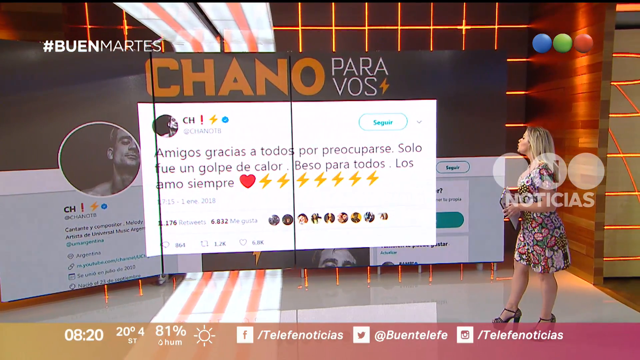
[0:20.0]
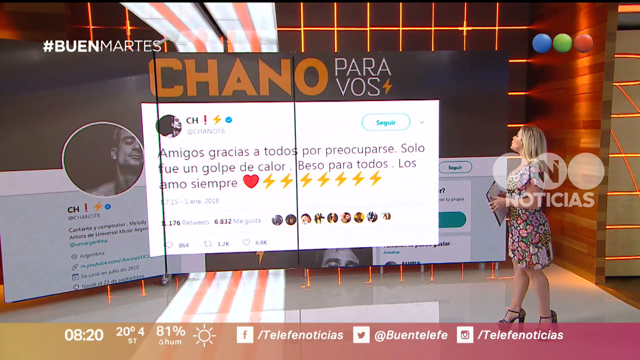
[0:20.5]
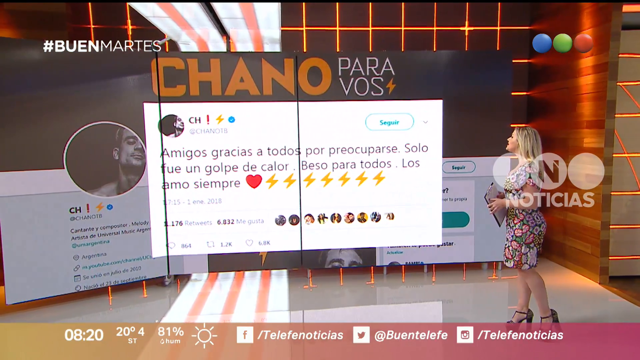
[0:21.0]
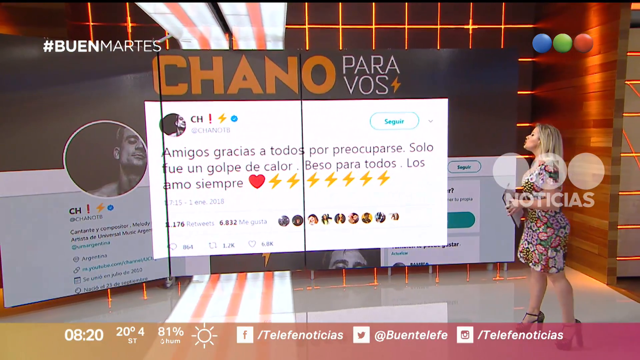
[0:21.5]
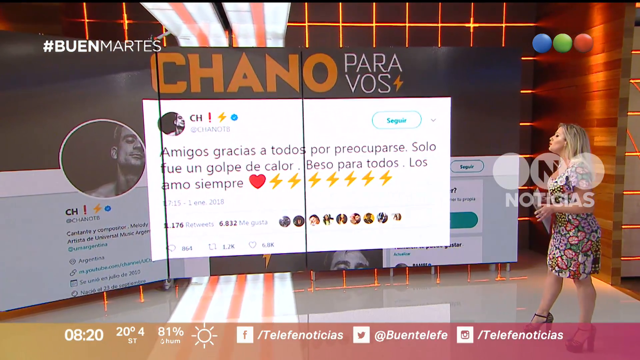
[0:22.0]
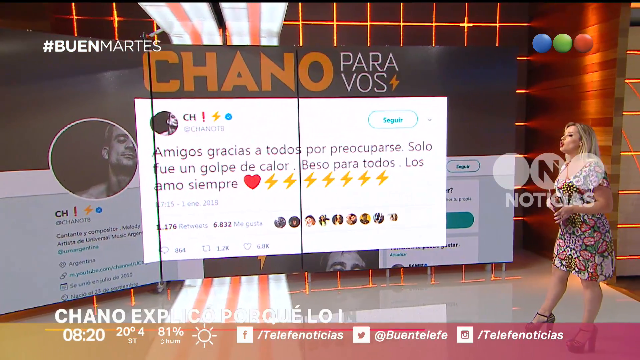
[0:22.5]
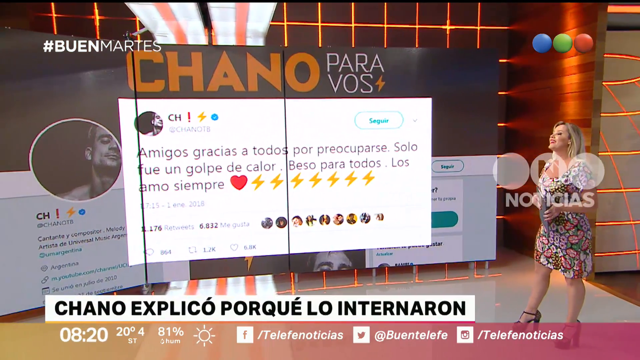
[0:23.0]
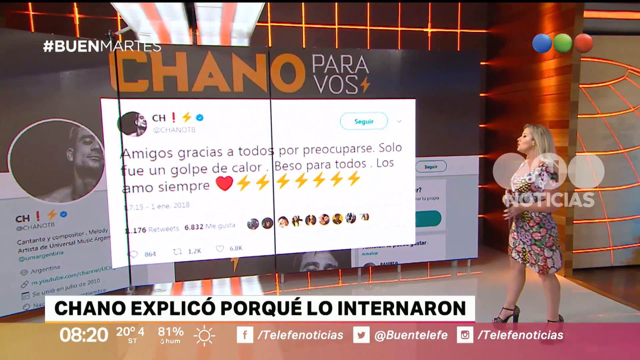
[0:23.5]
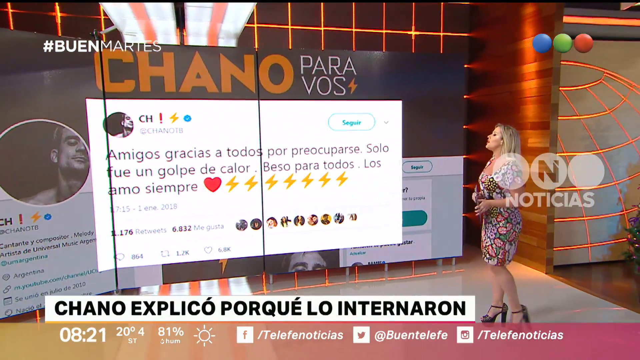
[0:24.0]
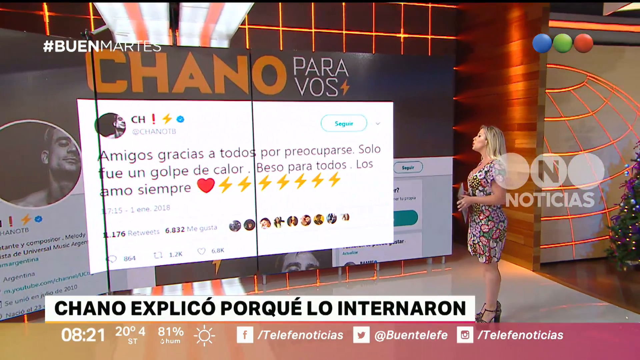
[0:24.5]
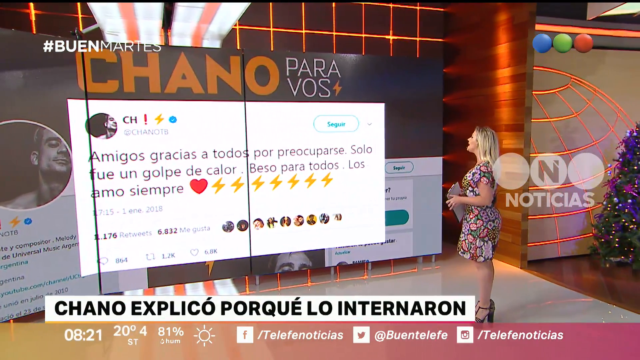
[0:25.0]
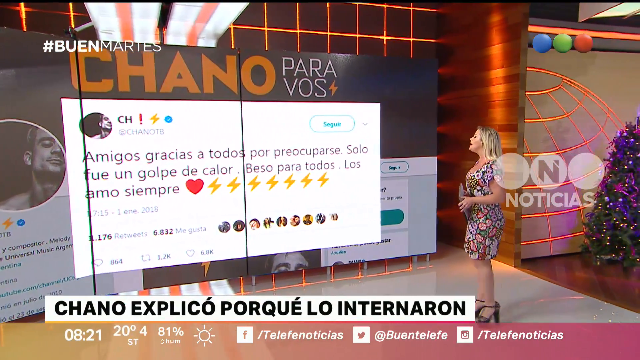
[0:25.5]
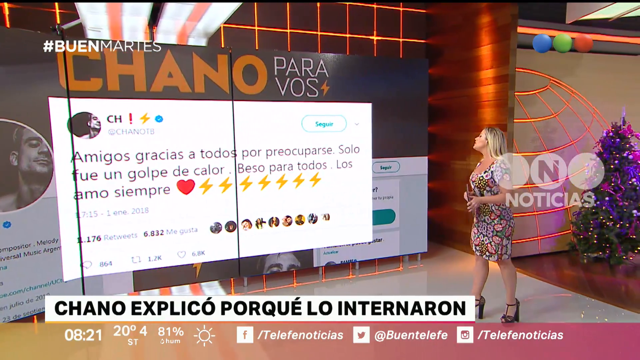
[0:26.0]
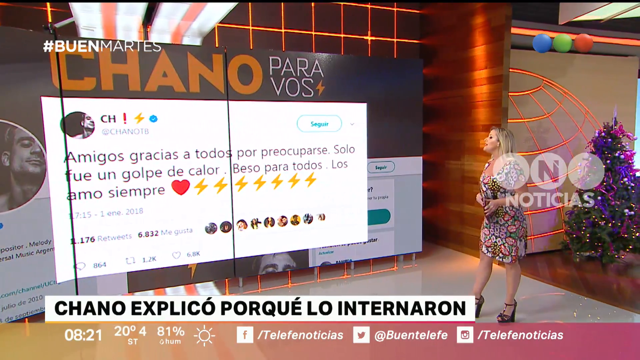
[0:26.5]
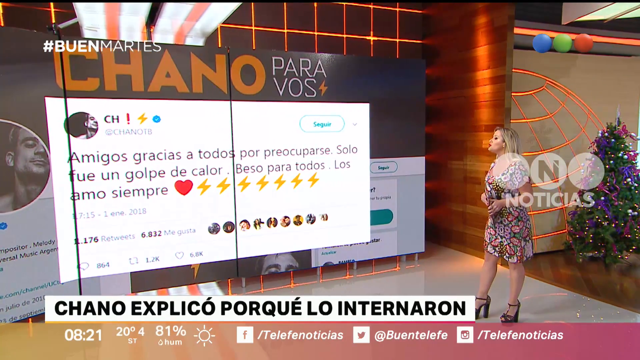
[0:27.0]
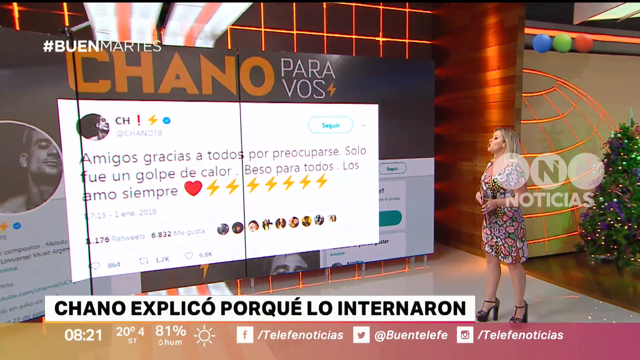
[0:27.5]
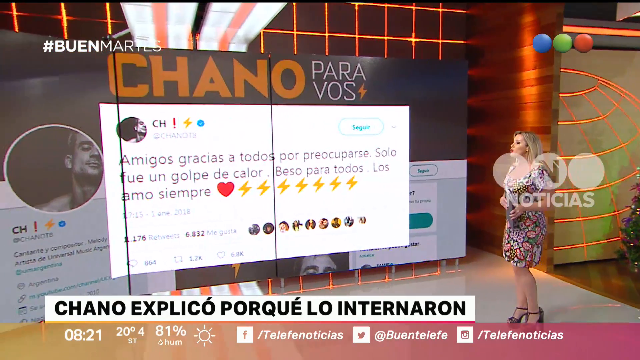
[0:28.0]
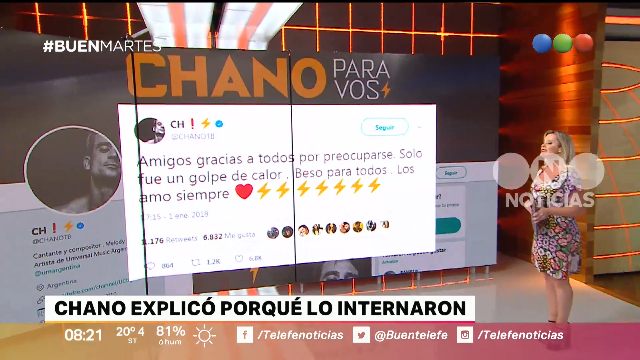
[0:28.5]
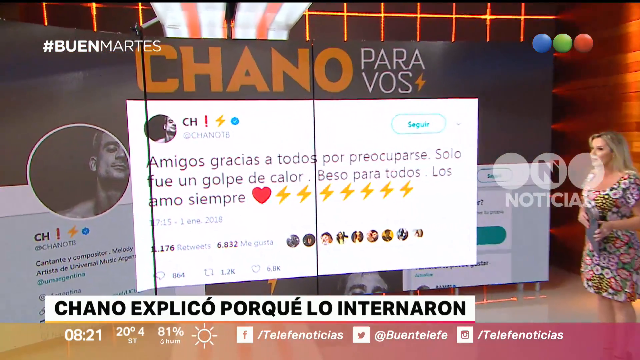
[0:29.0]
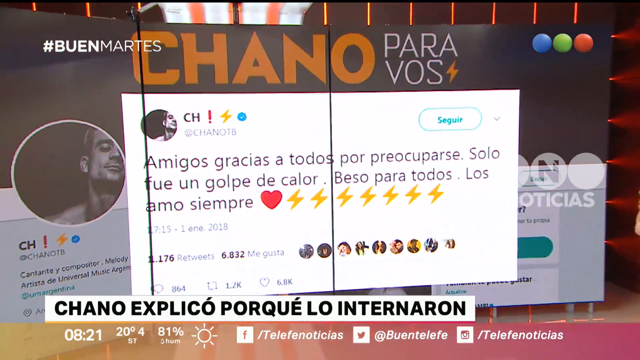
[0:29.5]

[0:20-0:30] A woman in a very flowery sundress holds a clipboard with both hands. She has shoulder-length blonde hair, blue eye shadow, red lipstick and pearl earrings, and wears high heel shoes. She stands on the right of the screen on a news stage, delivering the news, with a monitor behind her that she uses for visuals. The broadcast appears to be from some kind of Spanish news network. The monitor shows a tweet in Spanish from a user named Chiano18; it ends with a heart emoji and seven lightning emojis and has 2,100 retweets and 6,800 likes. The woman stands on the stage talking about the tweet, and the camera then zooms in on the monitor, showing the tweet larger. Behind the woman, somewhat beside her on the stage, is a regular green Christmas tree with purple and pink bulbs and butterflies on it.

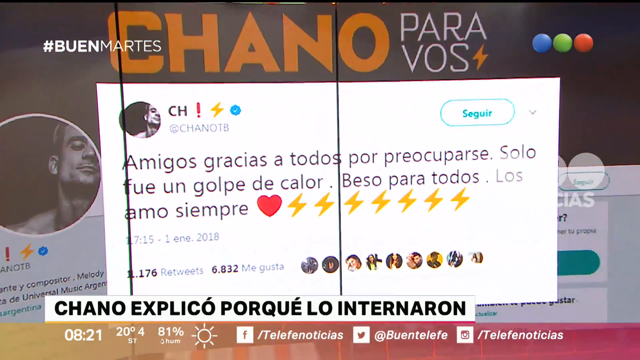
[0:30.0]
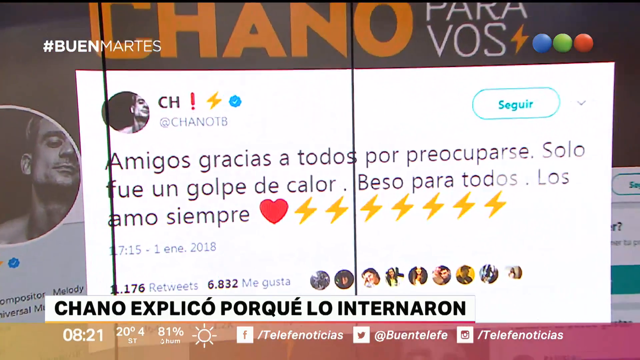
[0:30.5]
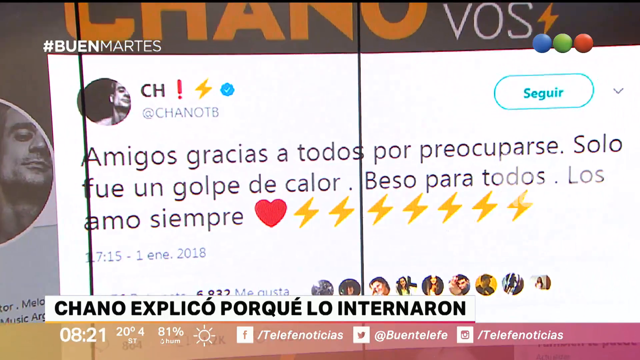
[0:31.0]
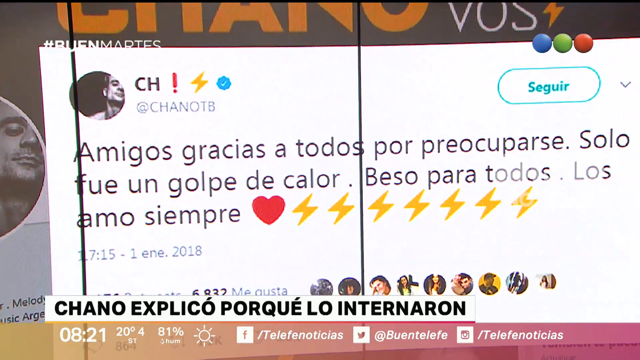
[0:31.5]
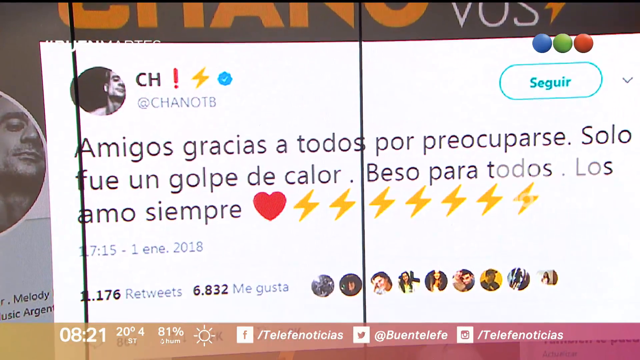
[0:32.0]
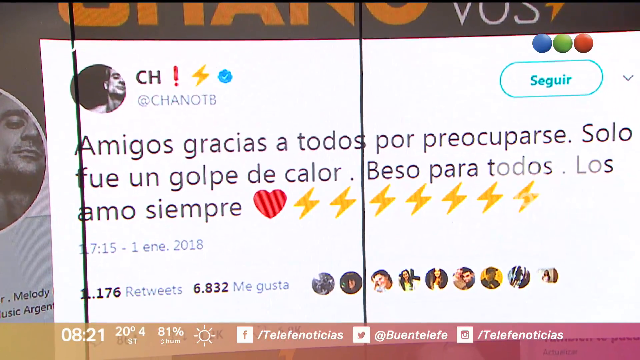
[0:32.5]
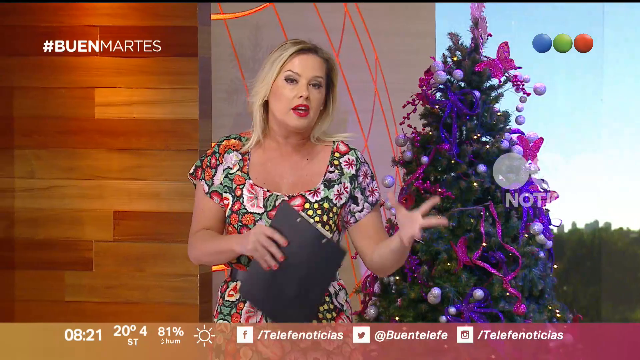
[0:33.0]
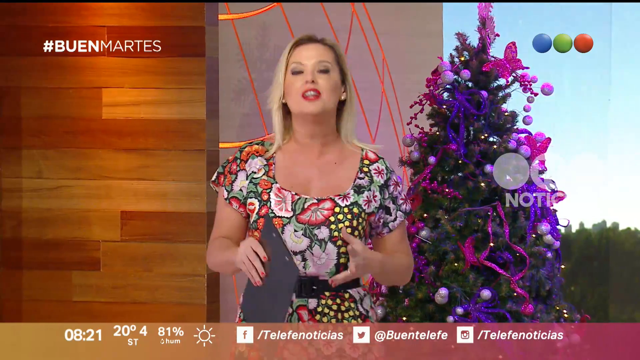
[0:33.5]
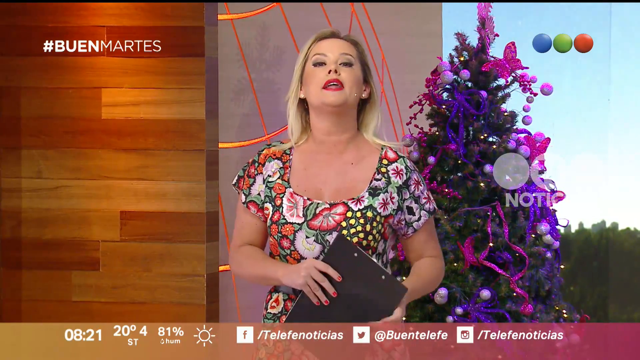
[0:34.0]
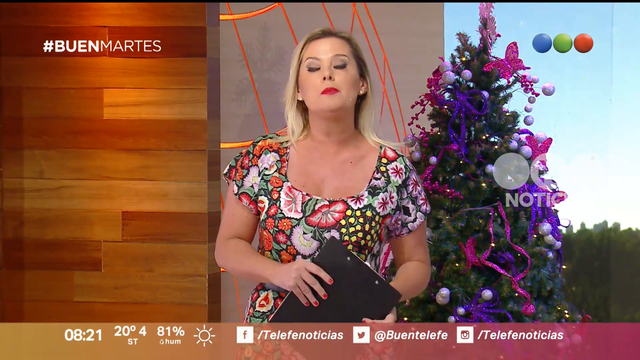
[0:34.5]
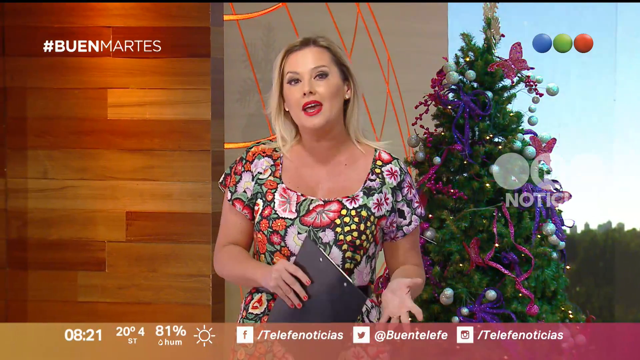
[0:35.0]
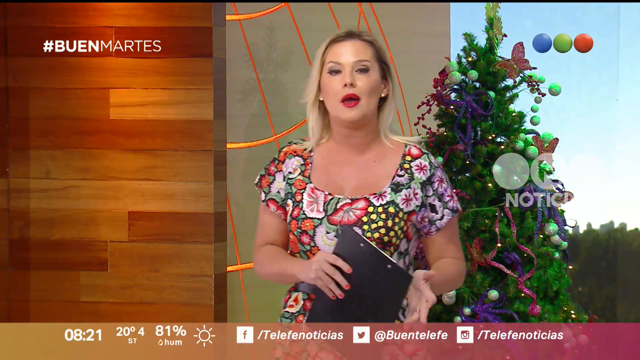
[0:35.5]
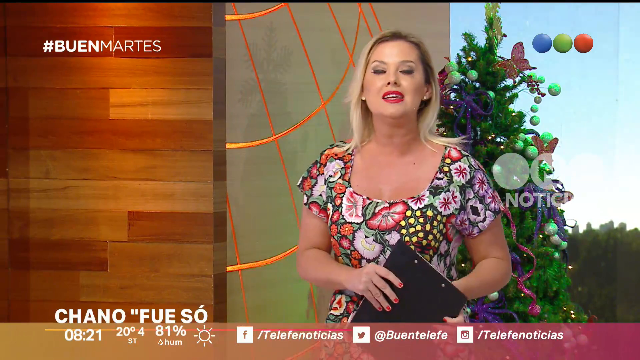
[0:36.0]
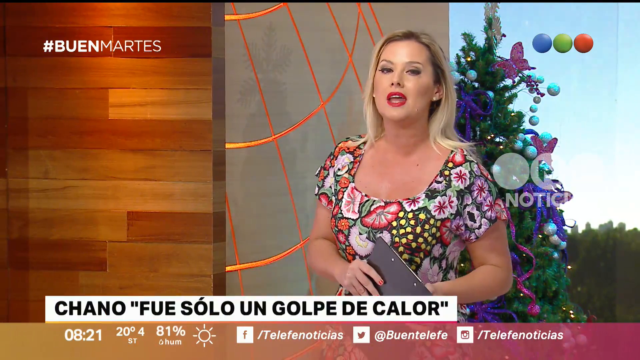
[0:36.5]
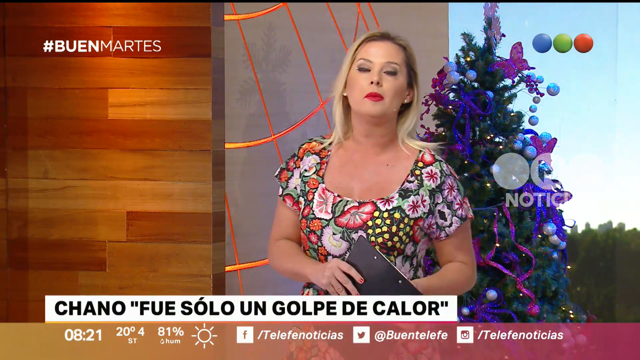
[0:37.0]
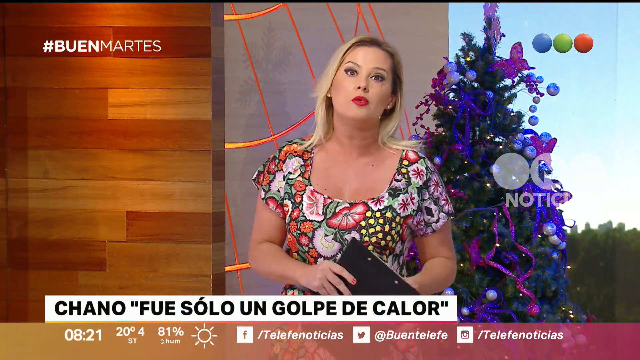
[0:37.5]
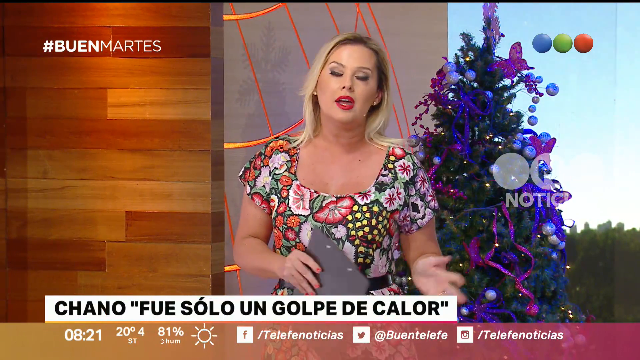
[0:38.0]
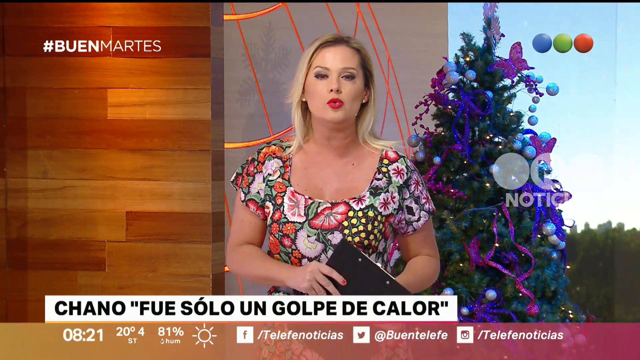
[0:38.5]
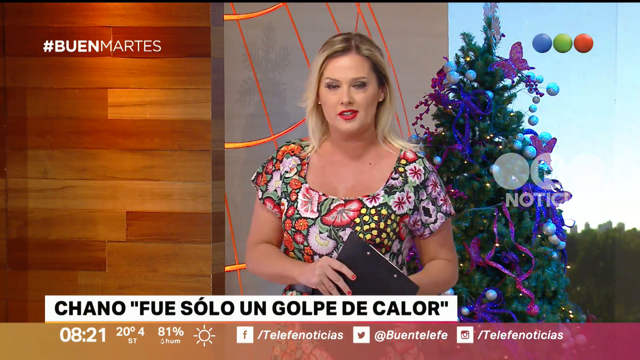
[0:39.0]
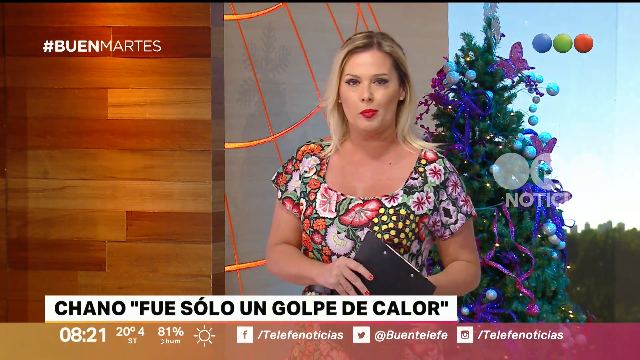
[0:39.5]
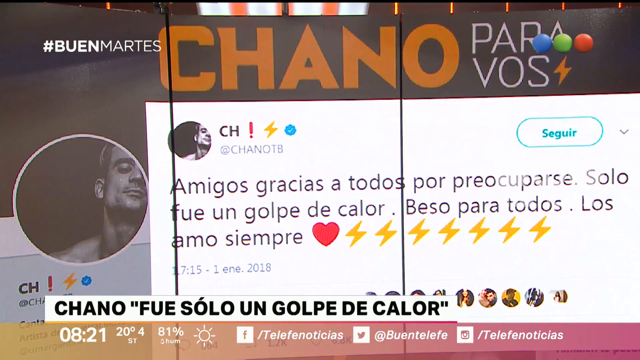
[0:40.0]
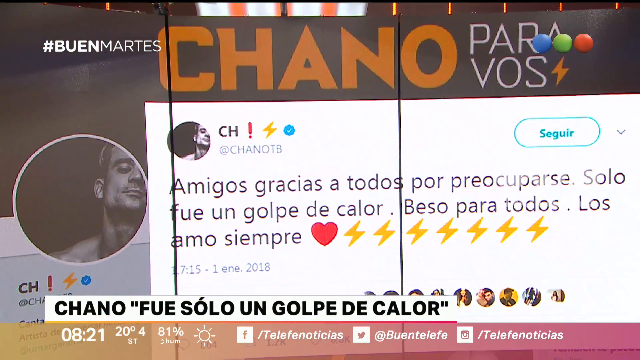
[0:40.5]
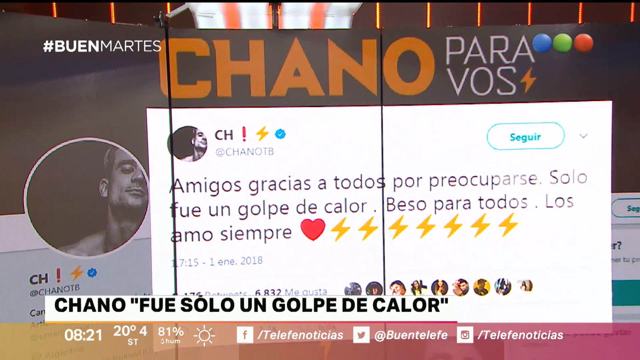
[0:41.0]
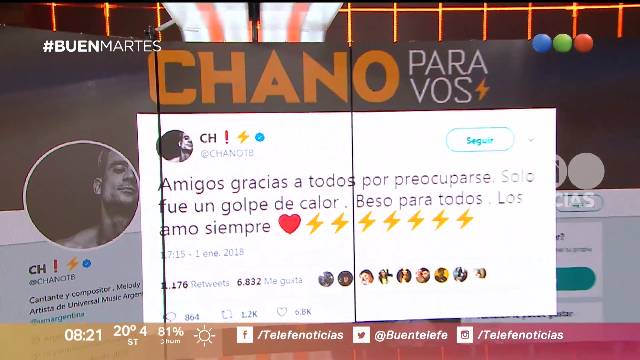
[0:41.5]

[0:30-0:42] A close-up shows a blonde woman with a clipboard in her hand, standing on a news stage and giving the news with a big monitor behind her that provides visuals. She wears a very flowery sundress and has shoulder-length blonde hair, red lipstick, blue eye shadow and pearl earrings. She holds the clipboard in her right hand and talks emphatically, motioning with her left hand. Over her left shoulder is a Christmas tree with purple and pink butterflies, tinsel and balls. It is a Spanish broadcast.